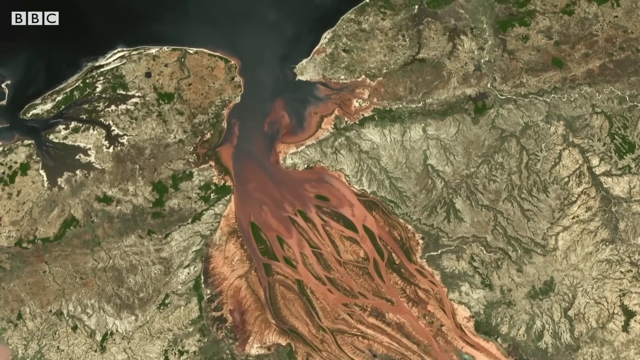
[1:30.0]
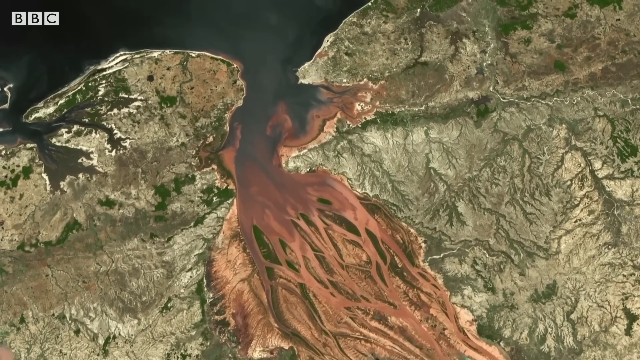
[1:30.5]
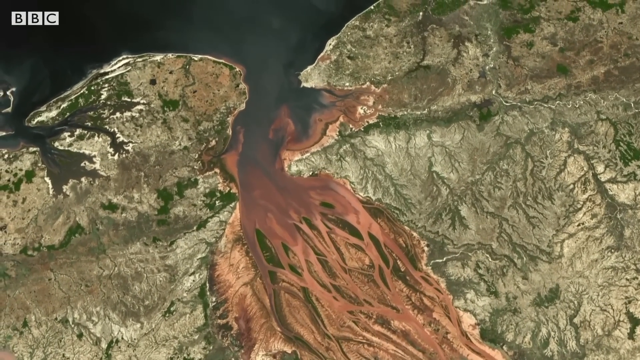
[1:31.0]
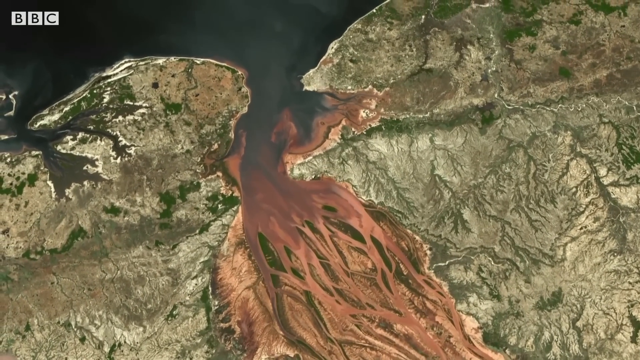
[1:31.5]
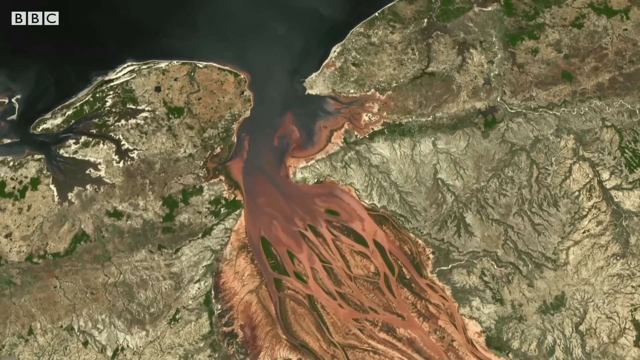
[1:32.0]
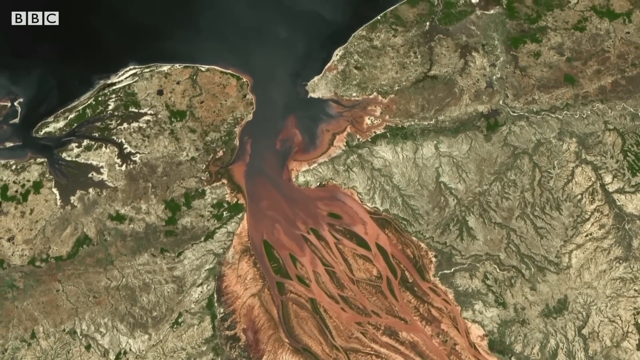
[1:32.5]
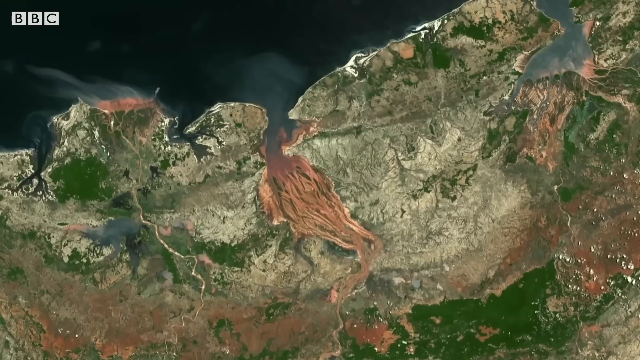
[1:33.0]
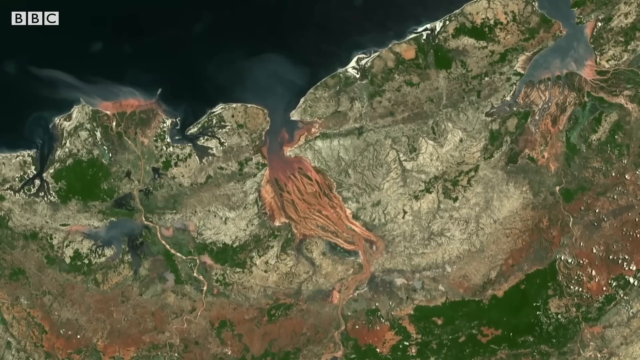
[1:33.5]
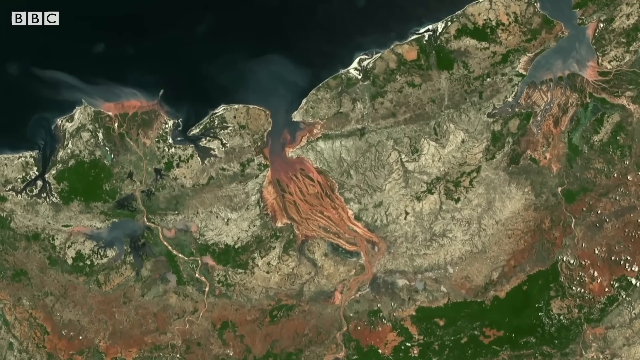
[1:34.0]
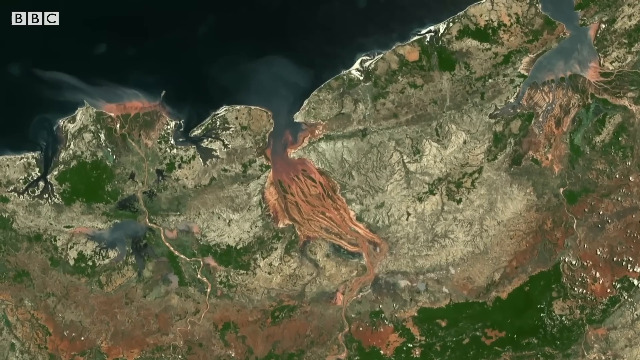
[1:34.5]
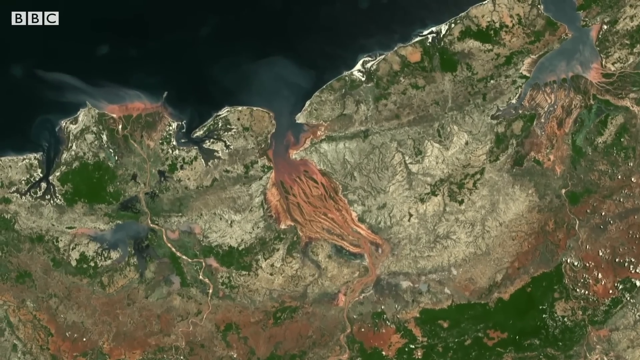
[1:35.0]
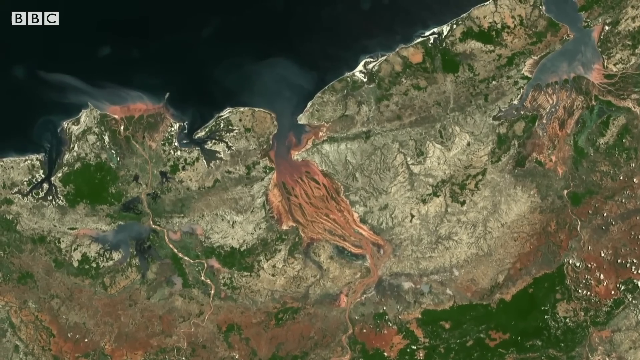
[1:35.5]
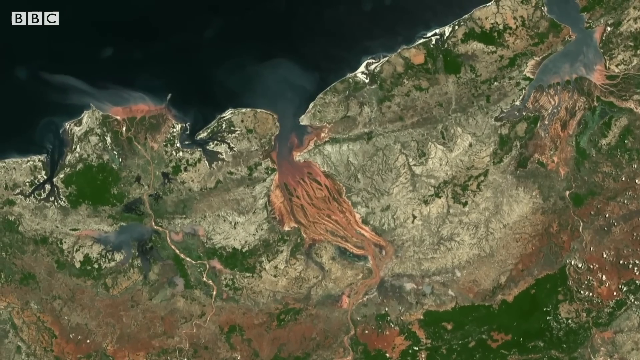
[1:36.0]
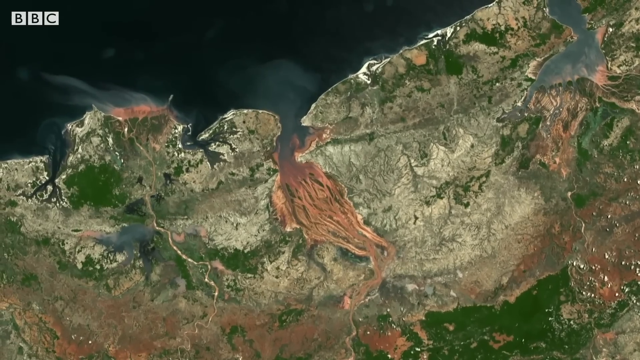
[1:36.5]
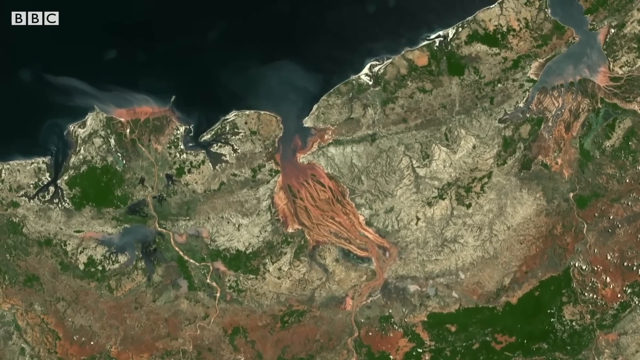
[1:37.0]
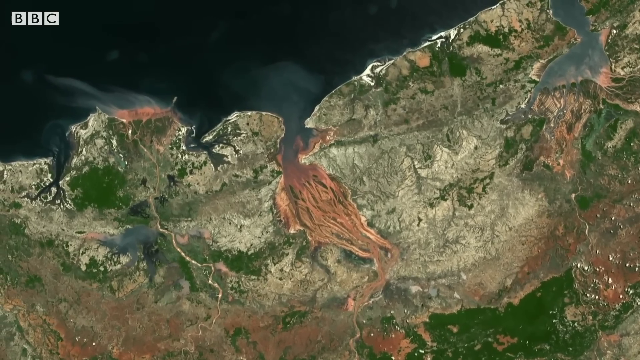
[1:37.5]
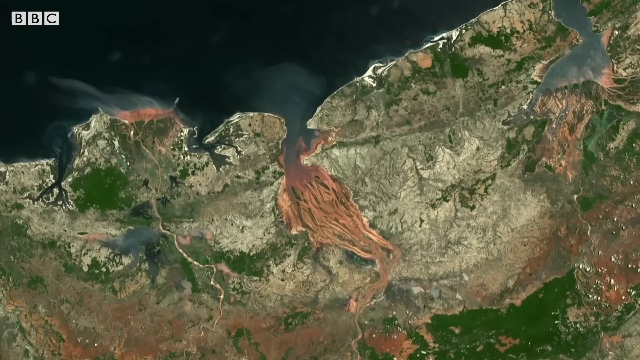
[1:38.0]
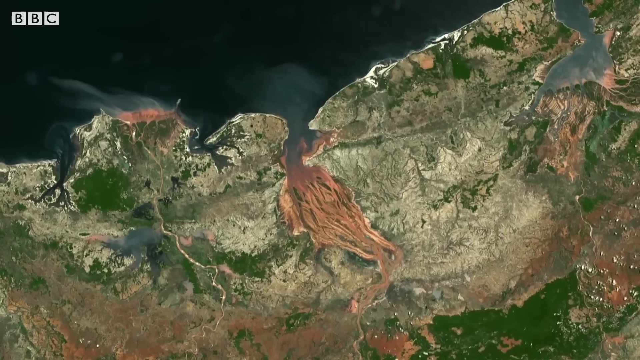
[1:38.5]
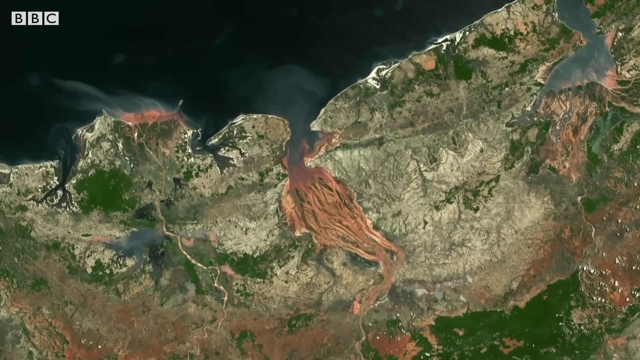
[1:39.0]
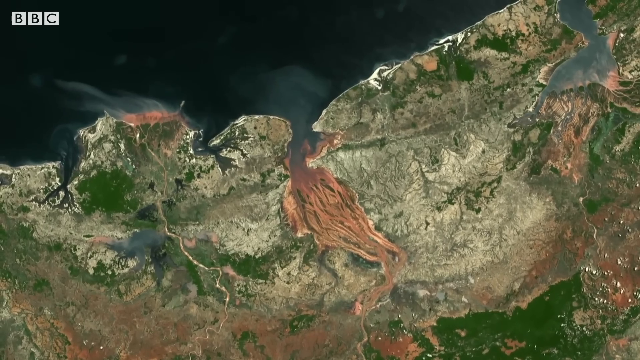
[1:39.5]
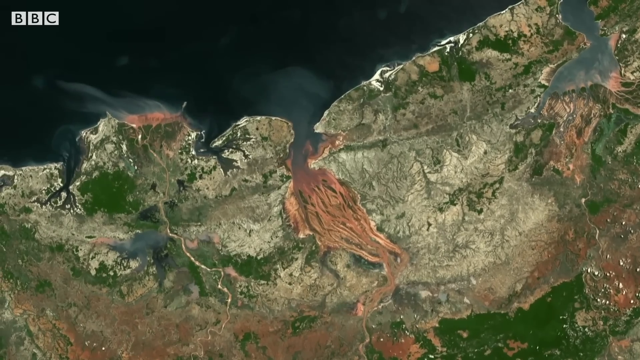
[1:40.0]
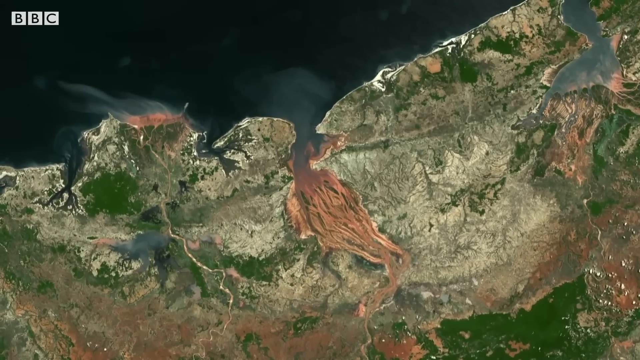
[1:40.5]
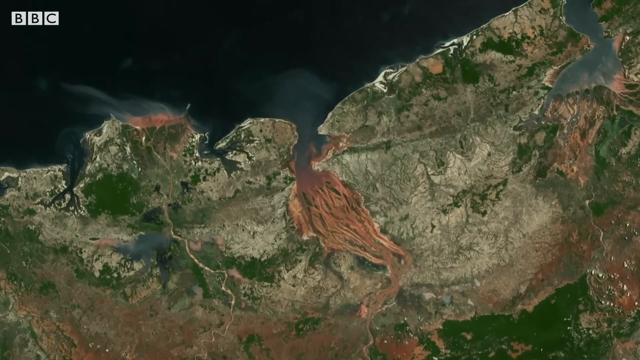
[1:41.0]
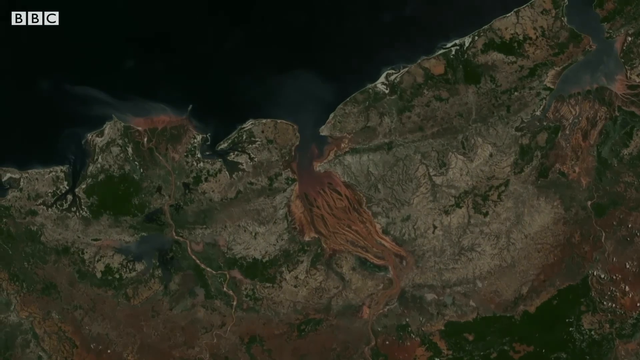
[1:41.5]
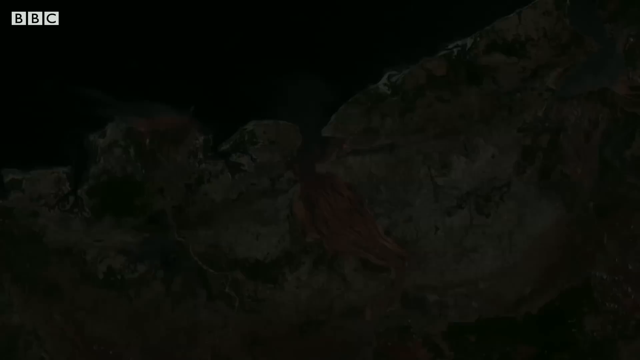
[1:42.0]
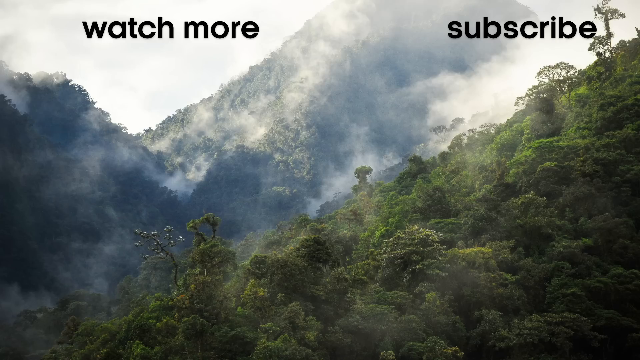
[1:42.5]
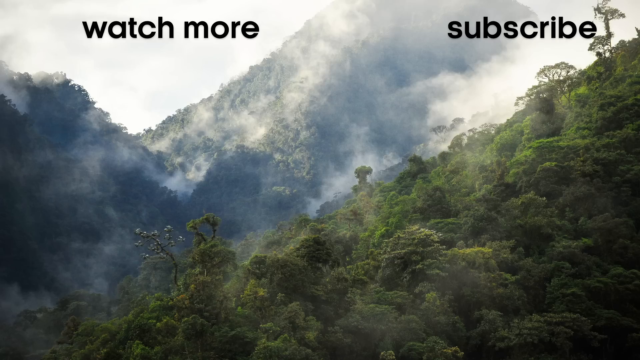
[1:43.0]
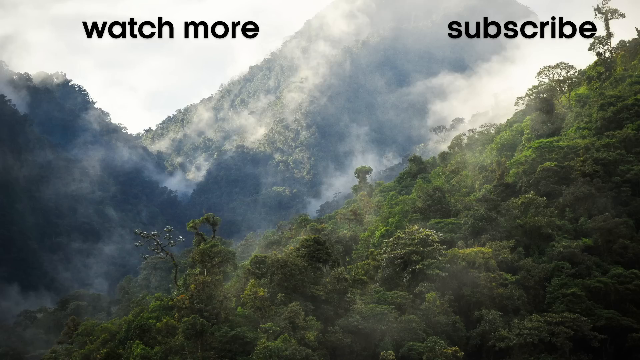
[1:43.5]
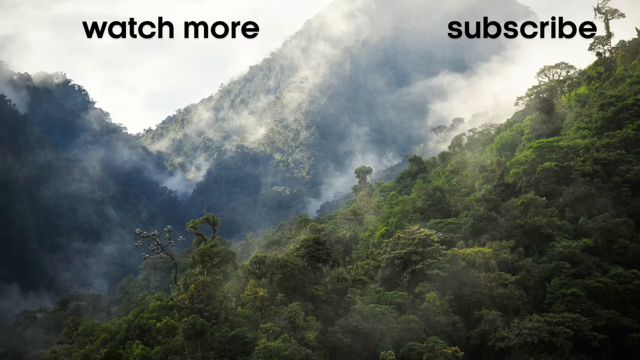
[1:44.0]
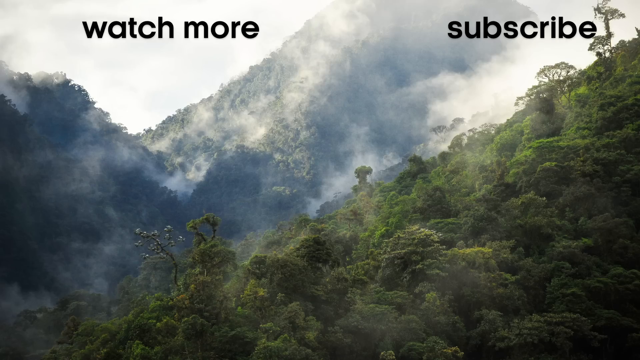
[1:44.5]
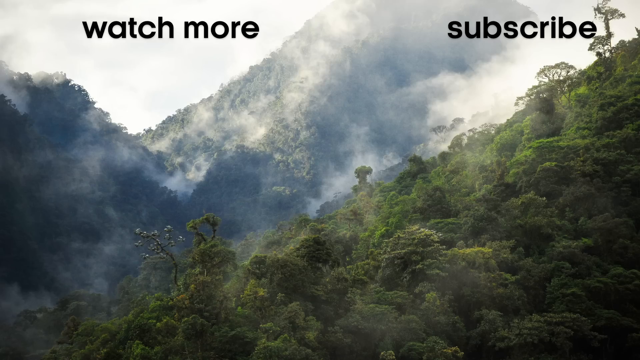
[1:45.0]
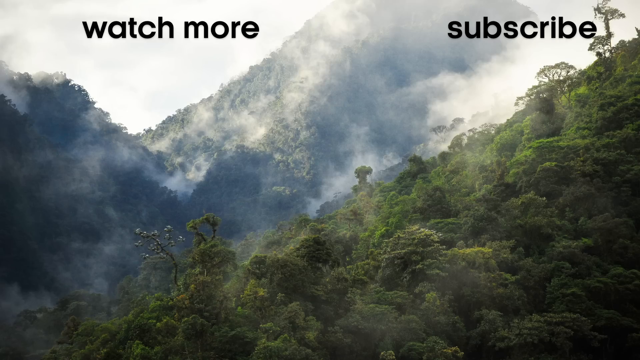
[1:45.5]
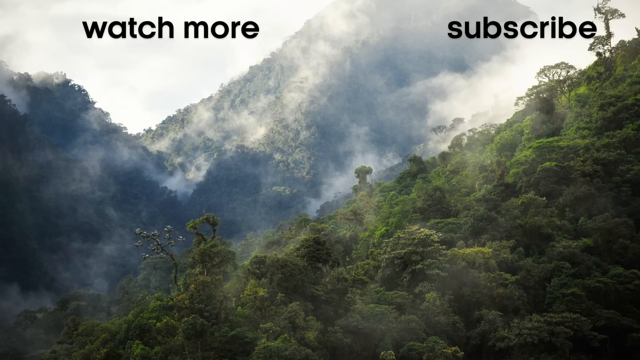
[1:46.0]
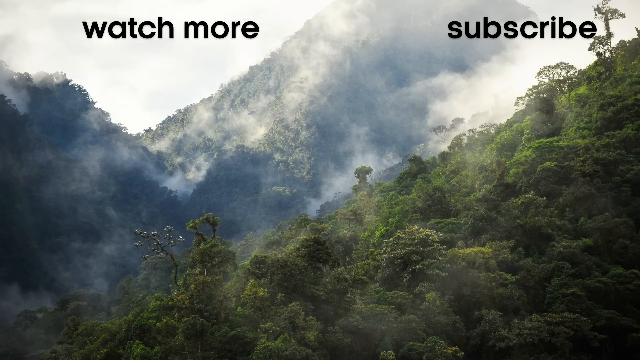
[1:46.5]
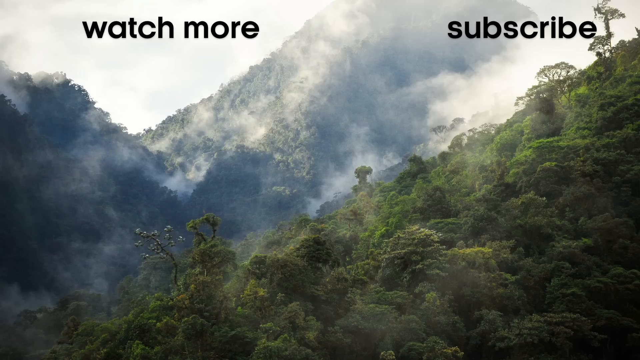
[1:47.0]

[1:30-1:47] The same black ash lava pool is shown, then the view zooms out from that surface to show the large surrounding environment. It is very dried out, with hardly any green left; most of it looks pale white, with a dried-out, rocky-looking texture and no big patches of grass. A huge expanse of ocean is at the top, with no sand visible, though some clouds are still reflected on the ocean, which looks very black from the sky view. The view pans to the left. A couple of pebbles or boulders are on the bottom right. The video then fades to black and ends.